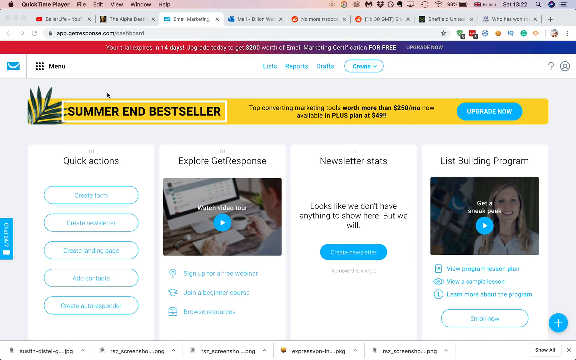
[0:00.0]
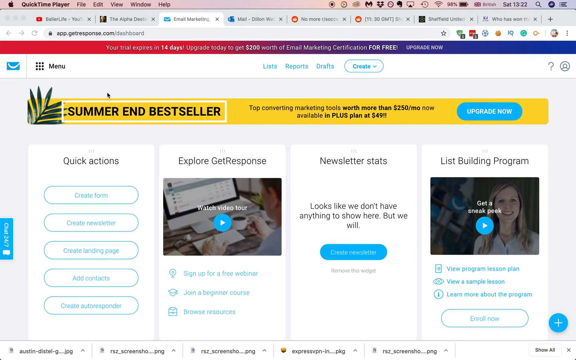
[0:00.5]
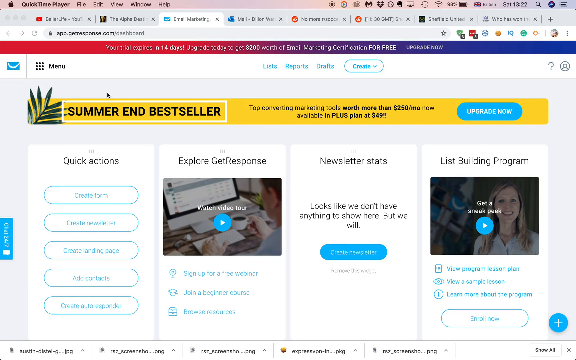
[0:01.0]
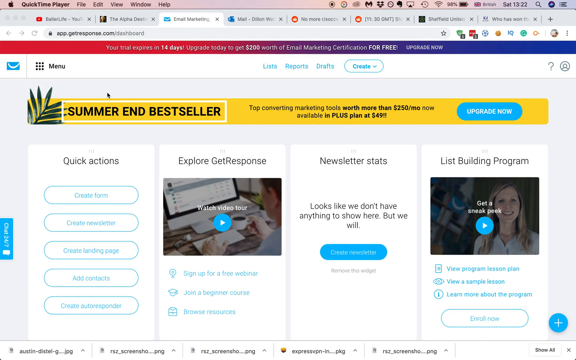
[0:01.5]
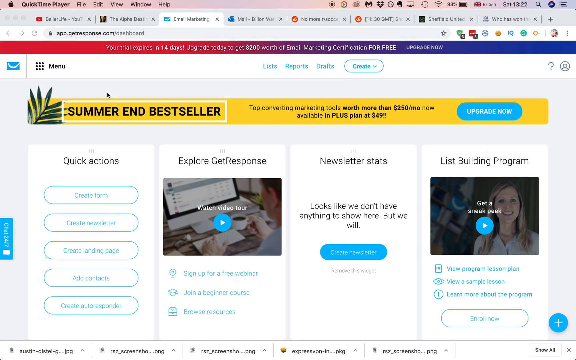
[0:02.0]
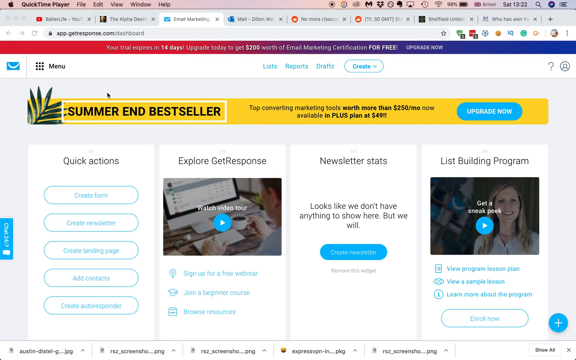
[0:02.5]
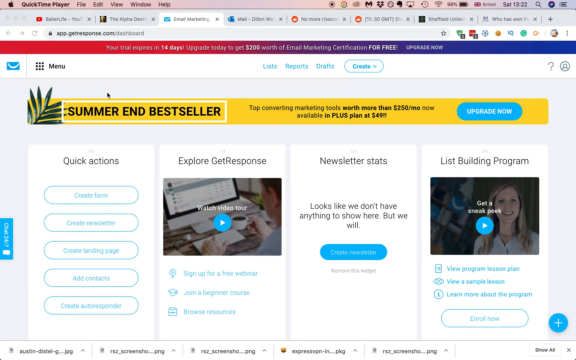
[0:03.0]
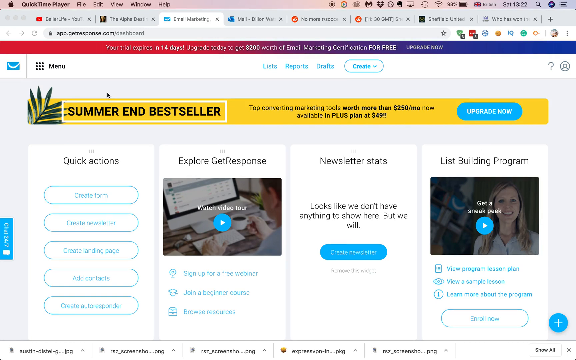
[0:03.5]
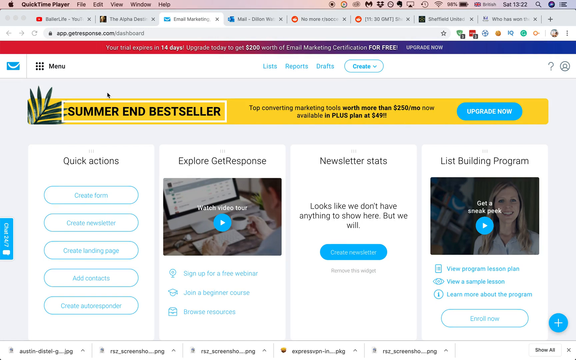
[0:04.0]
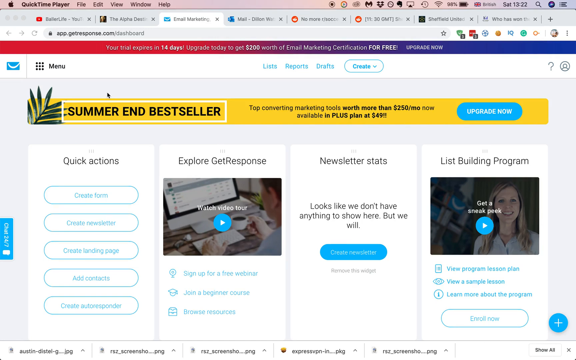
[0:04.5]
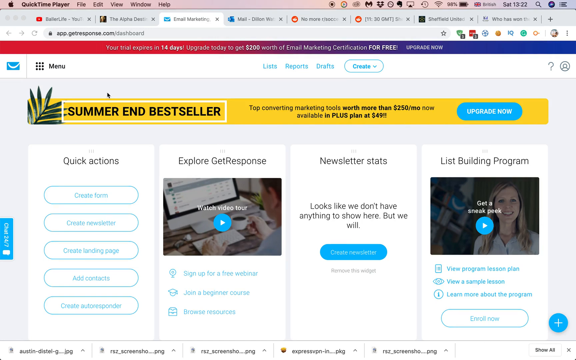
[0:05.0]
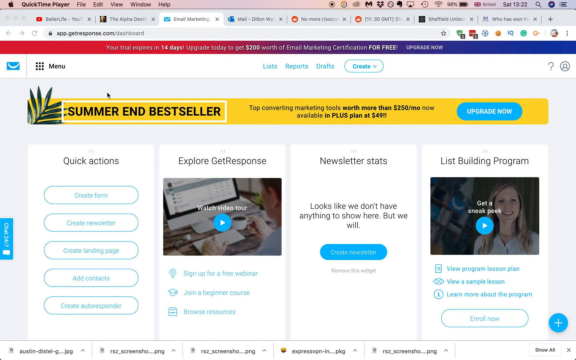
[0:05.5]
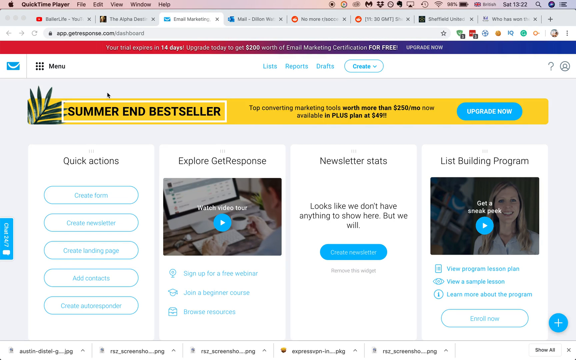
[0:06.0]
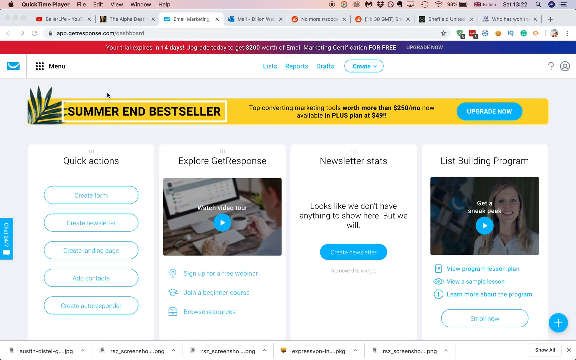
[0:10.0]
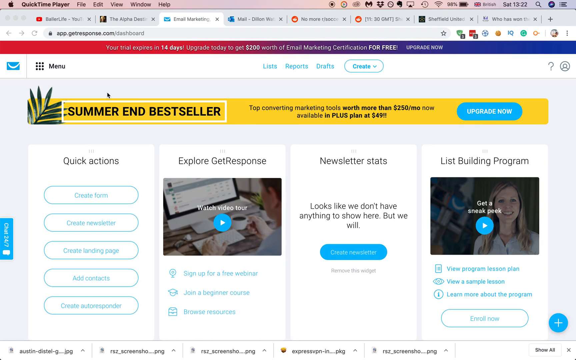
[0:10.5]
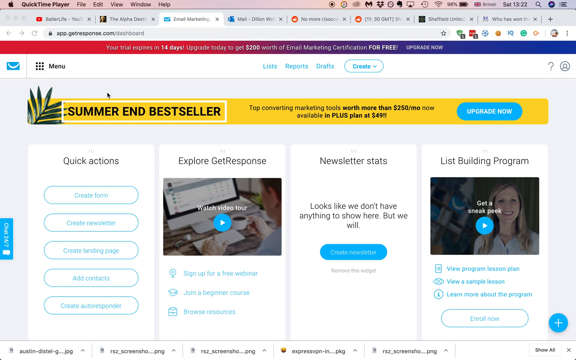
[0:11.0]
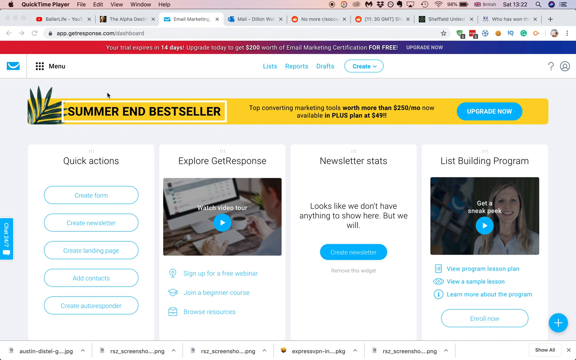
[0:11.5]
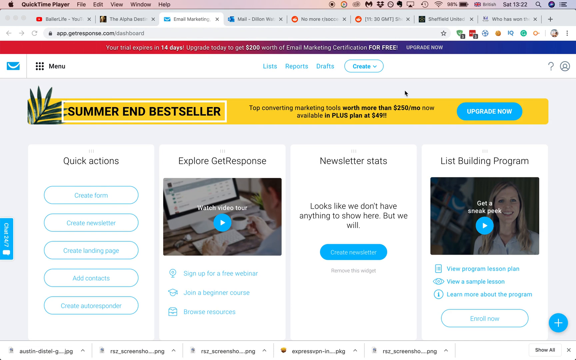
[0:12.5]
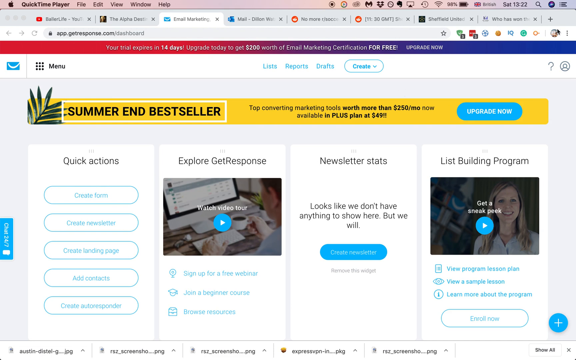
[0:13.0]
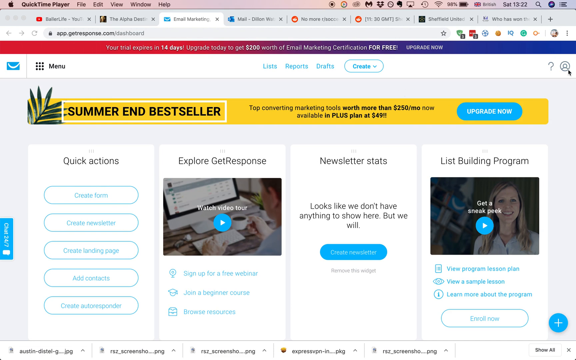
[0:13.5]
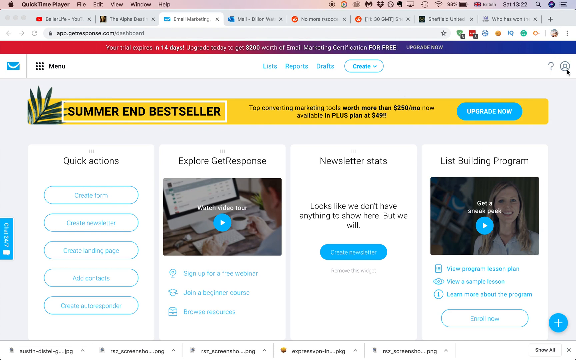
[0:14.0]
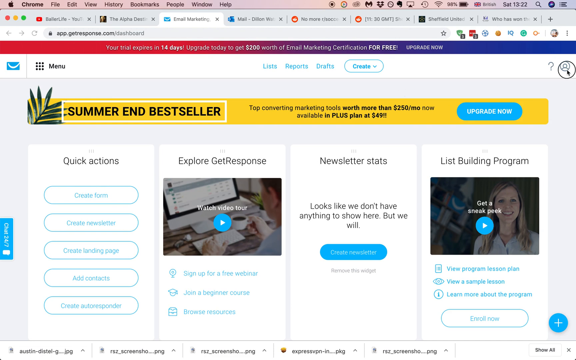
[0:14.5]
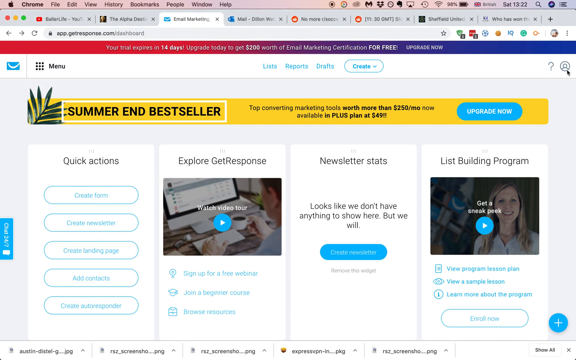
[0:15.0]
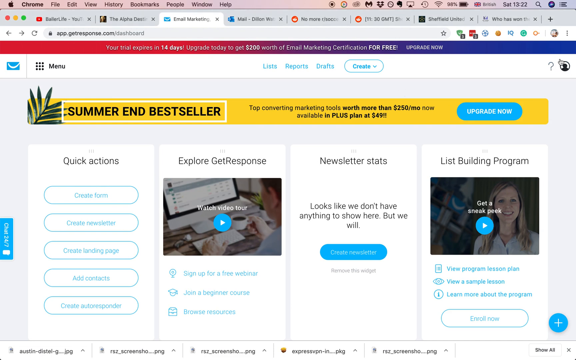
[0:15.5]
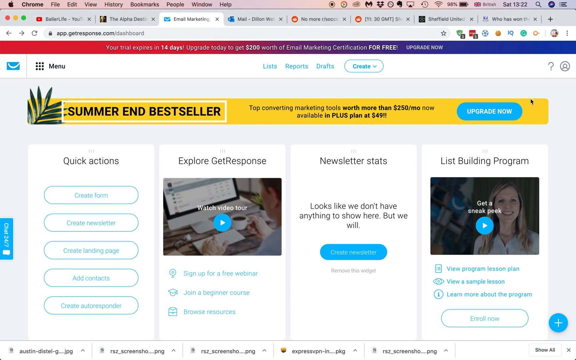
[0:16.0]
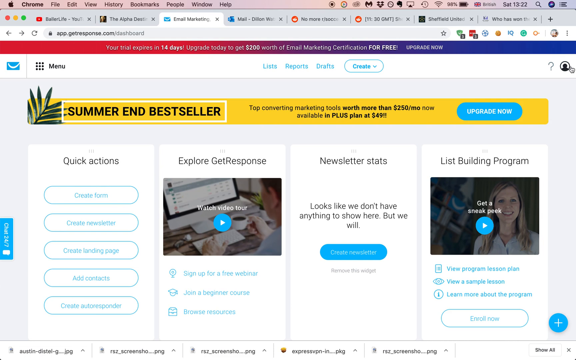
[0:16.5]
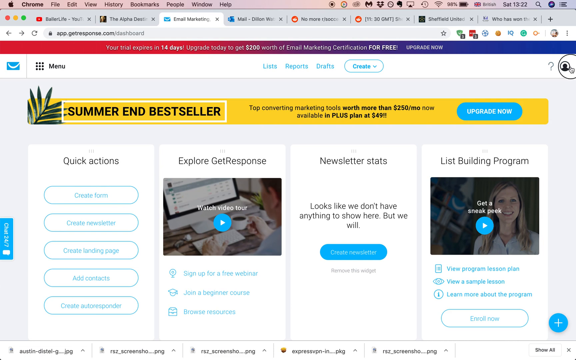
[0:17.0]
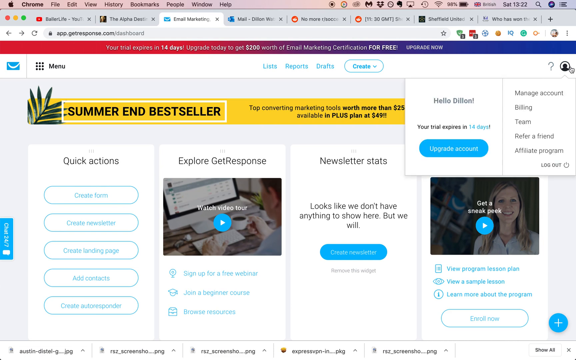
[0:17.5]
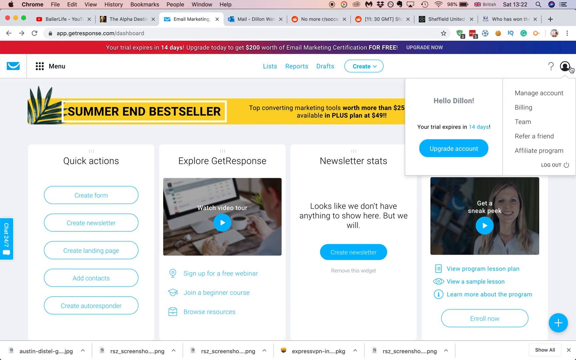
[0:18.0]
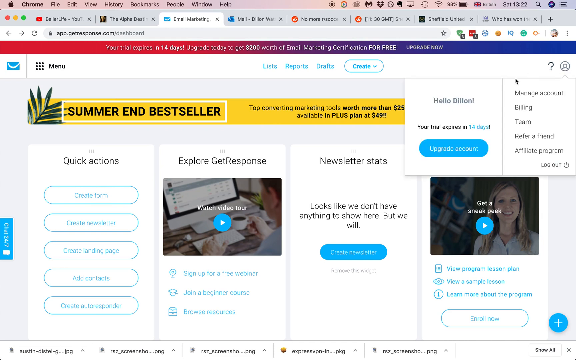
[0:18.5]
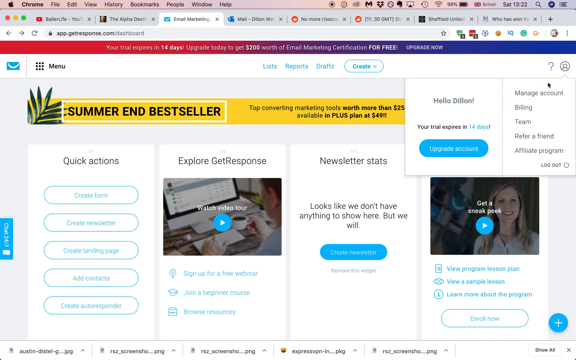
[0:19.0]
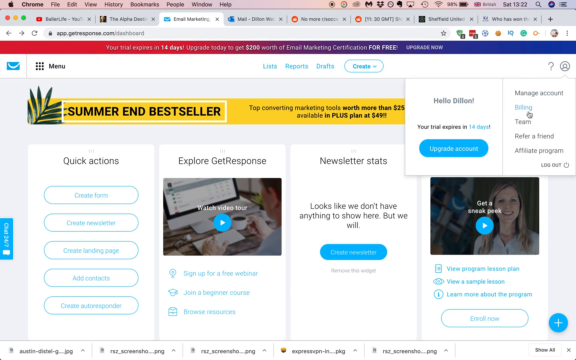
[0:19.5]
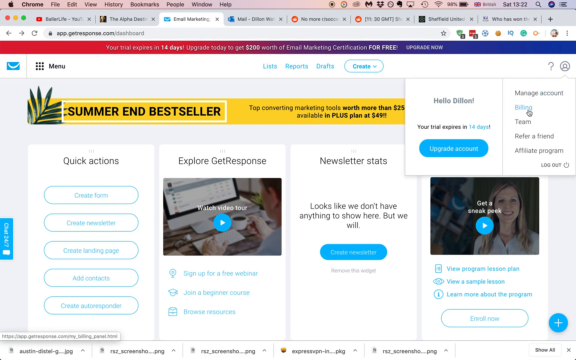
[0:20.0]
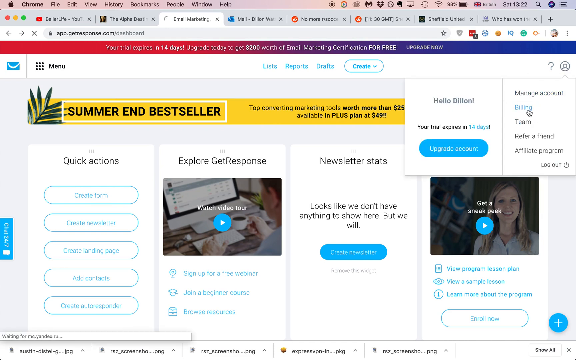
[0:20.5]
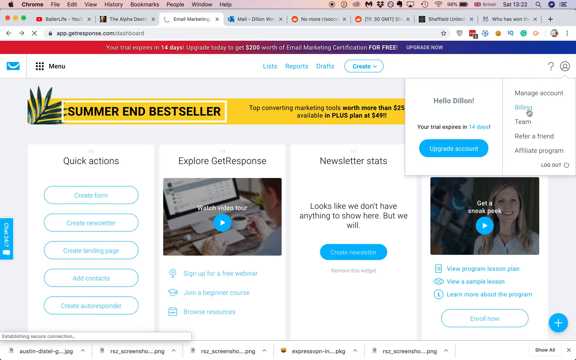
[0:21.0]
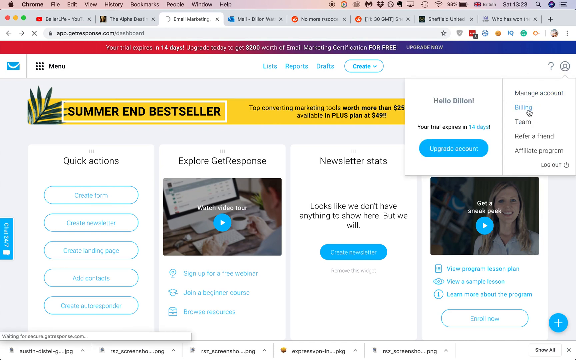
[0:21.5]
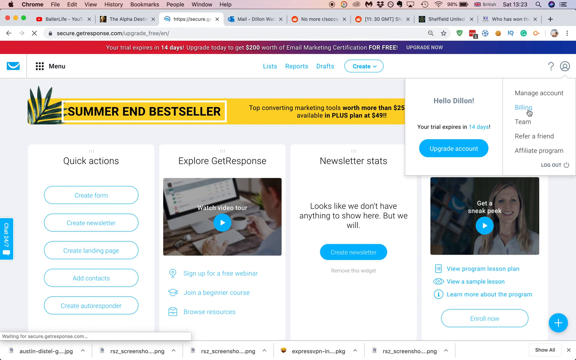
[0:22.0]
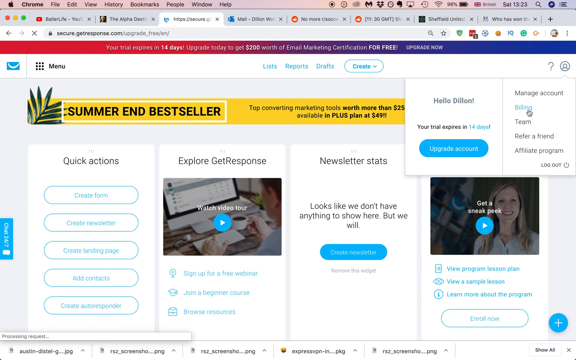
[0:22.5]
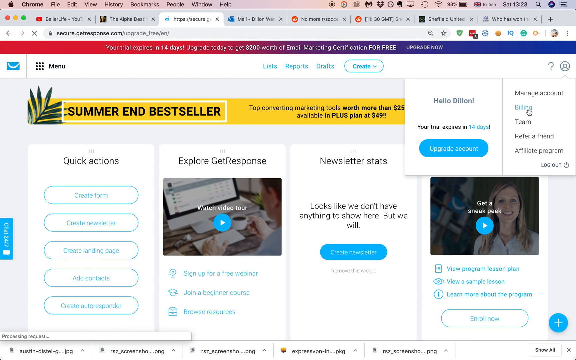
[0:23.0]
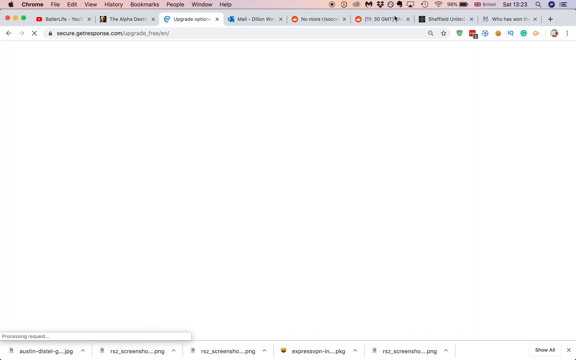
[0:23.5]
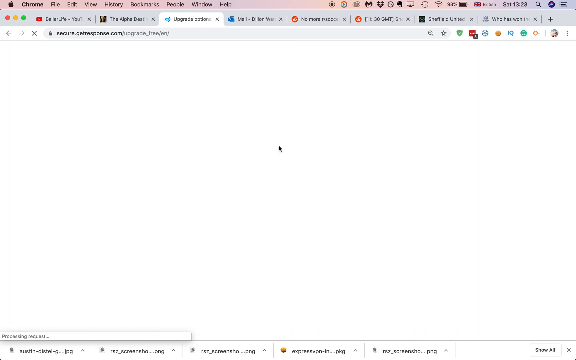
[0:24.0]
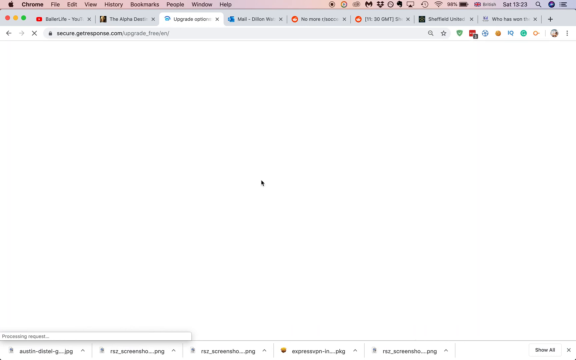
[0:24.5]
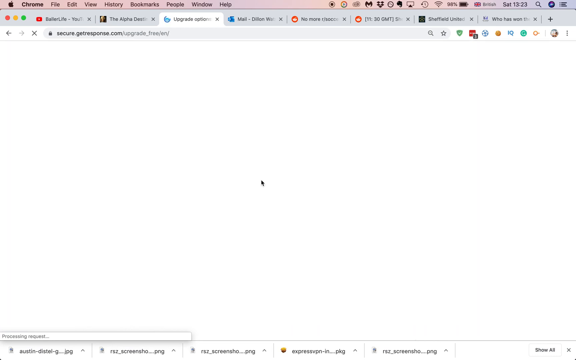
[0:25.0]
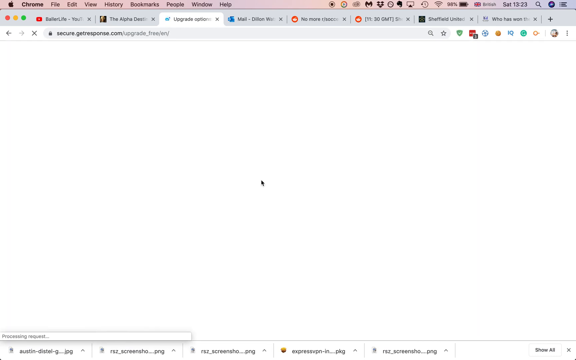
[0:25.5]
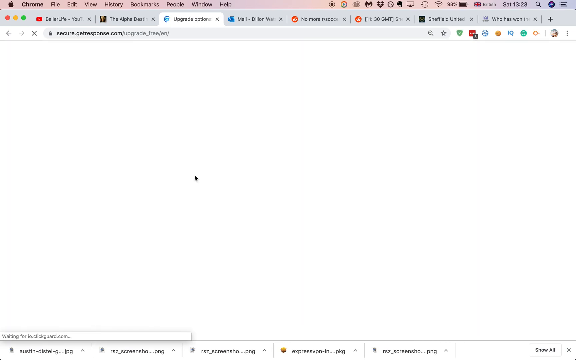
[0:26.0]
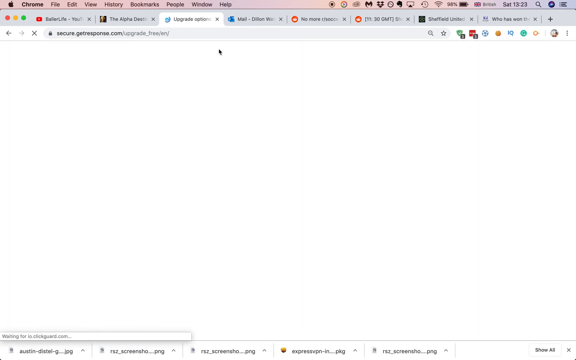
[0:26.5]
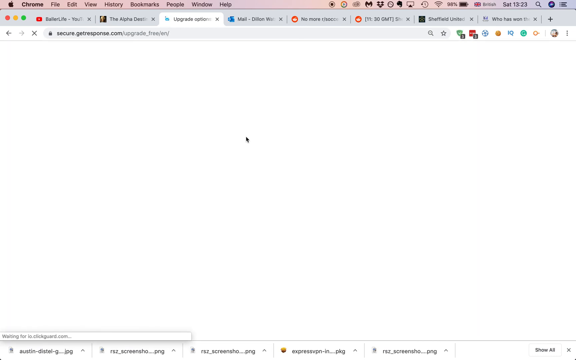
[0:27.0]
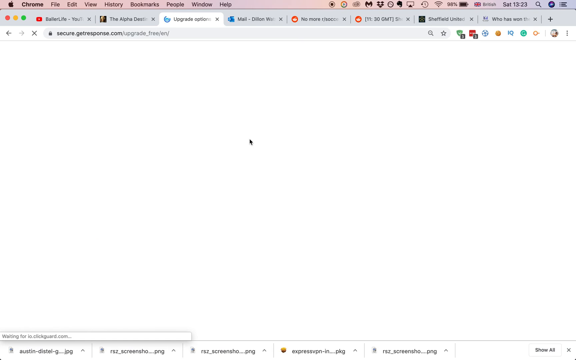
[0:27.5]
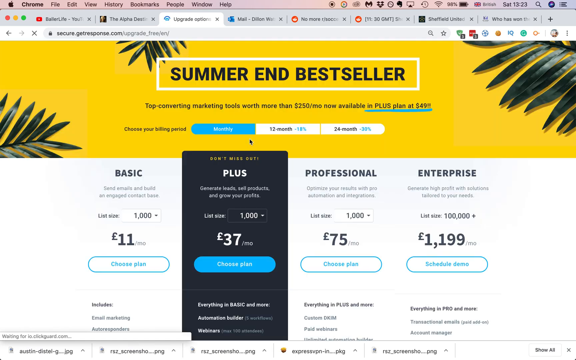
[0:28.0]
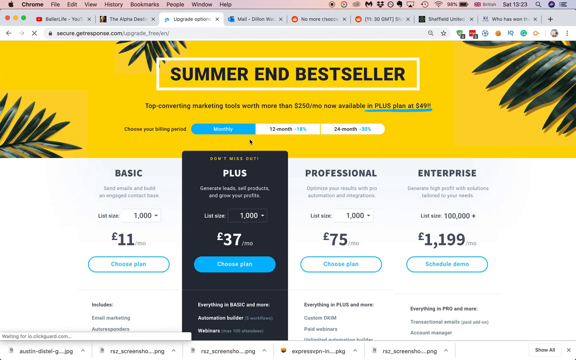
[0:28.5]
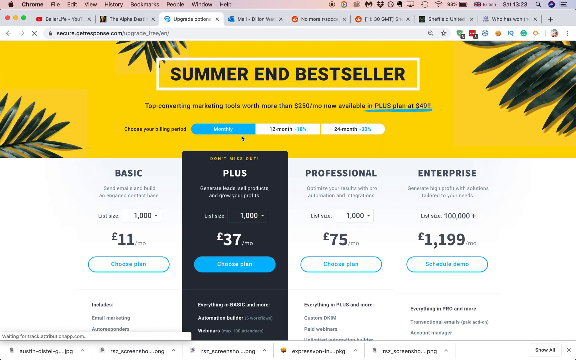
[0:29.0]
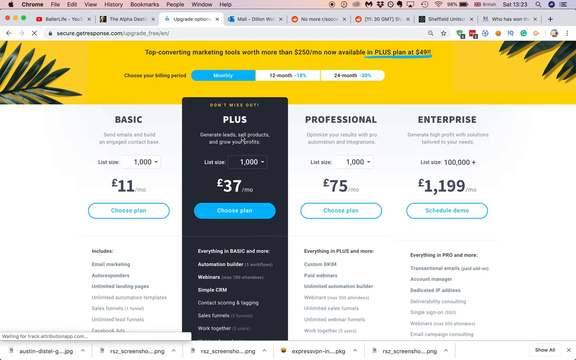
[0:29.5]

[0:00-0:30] A website's dashboard is shown, with the search bar reading "app.getresponse.com/dashboard". A yellow header says "Top Converting Marketing Tools. More than $250 a month now available in Plus Plan at $49" followed by two exclamation points. To the right of the yellow header is a blue button that reads "UPGRADE NOW". The page has four panels, titled "Quick Actions", "Explore, Get Response", "Newsletter Stats" and "List Building Program". At first there is no movement. The user then moves the cursor to the profile icon in the top right of the screen, clicks but misses the button, and clicks again; a small drop-down menu appears beneath it, containing two columns with several clickable options. The user clicks the "billing" option and is taken to another page. While waiting, the user moves the cursor in circular motions in the middle of the screen. When the page finally loads, four subscription plan options are shown.